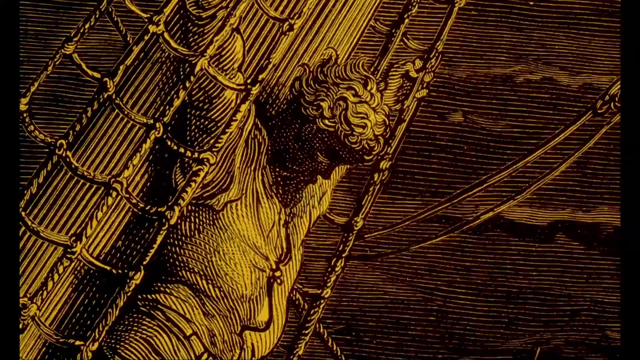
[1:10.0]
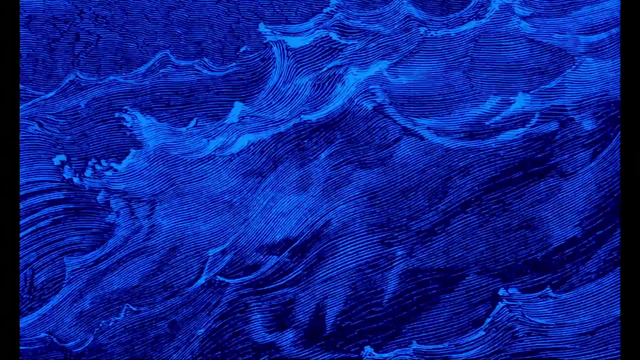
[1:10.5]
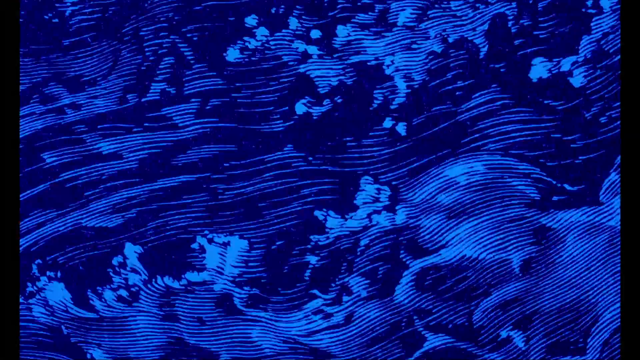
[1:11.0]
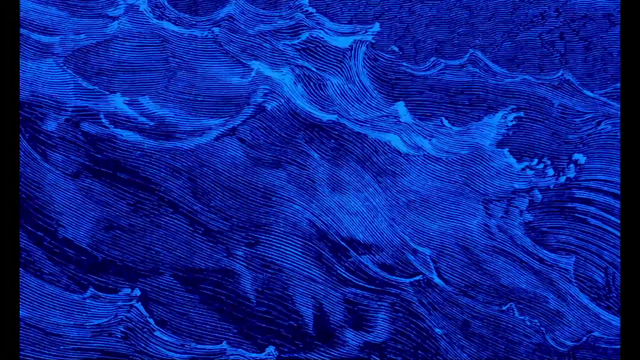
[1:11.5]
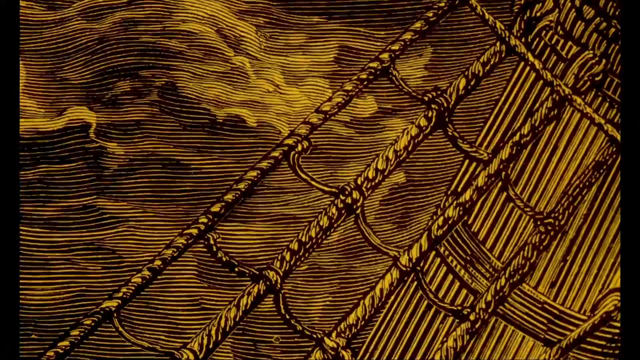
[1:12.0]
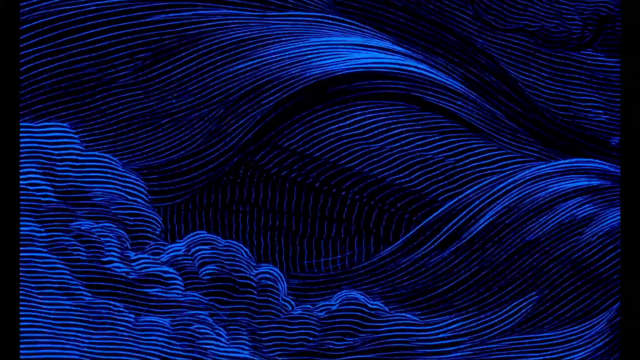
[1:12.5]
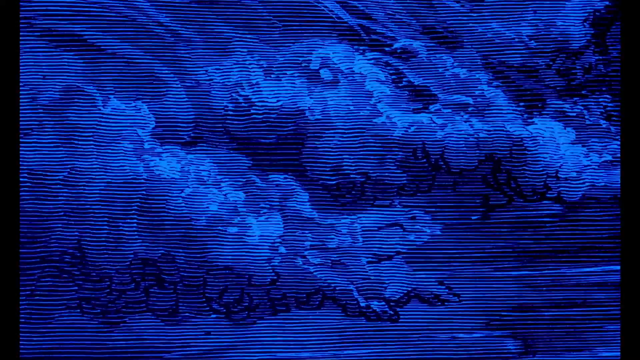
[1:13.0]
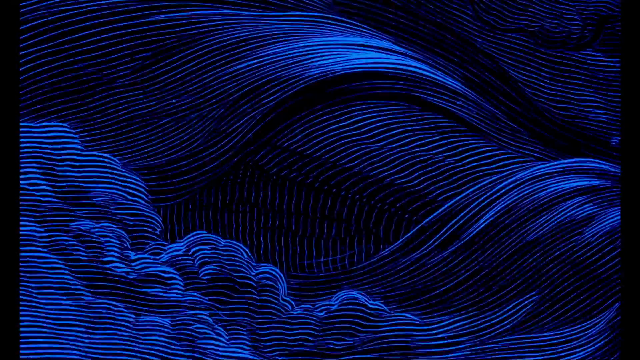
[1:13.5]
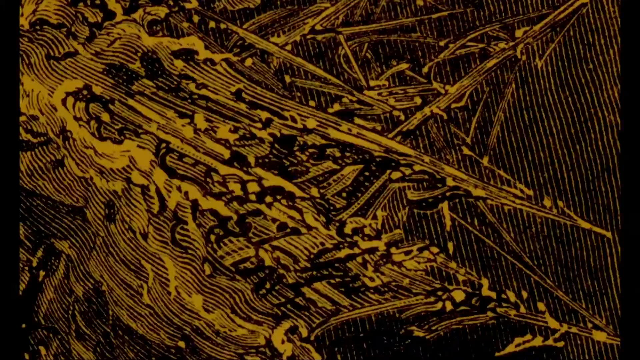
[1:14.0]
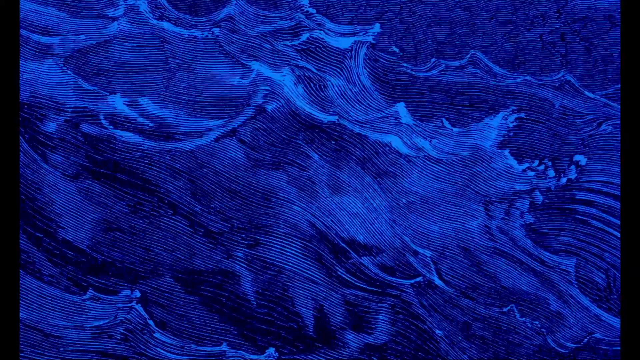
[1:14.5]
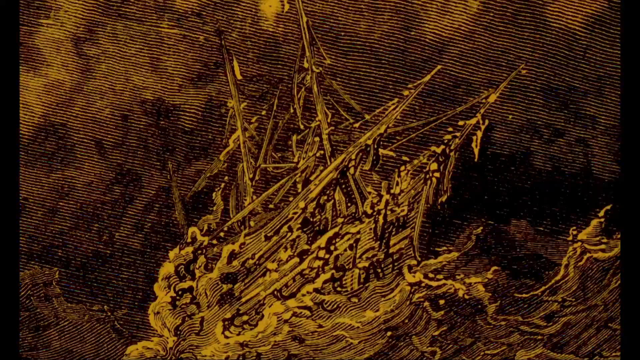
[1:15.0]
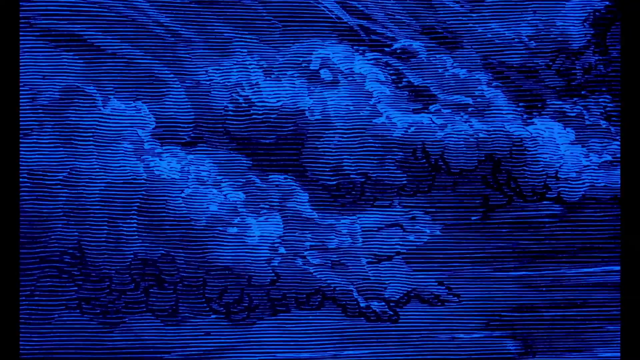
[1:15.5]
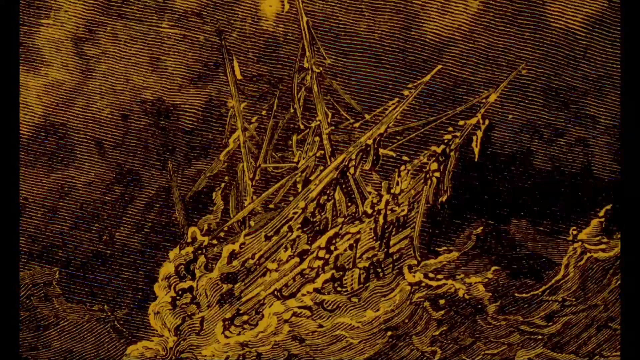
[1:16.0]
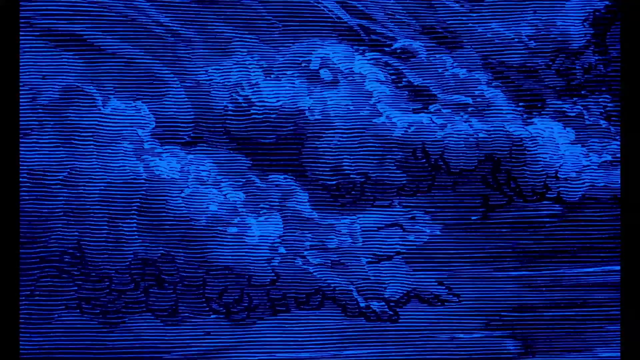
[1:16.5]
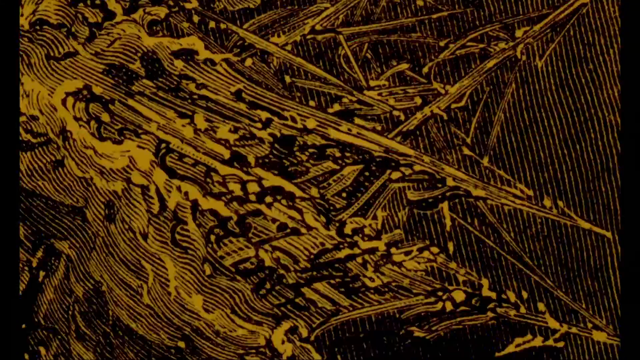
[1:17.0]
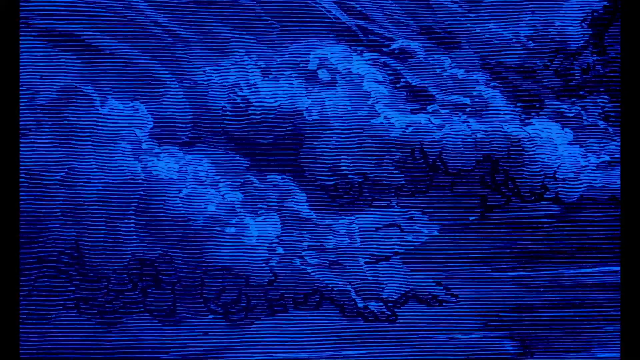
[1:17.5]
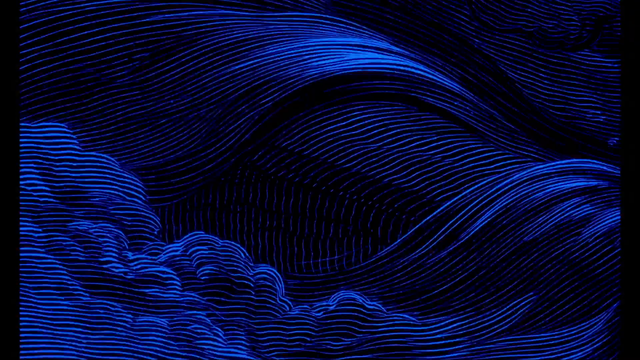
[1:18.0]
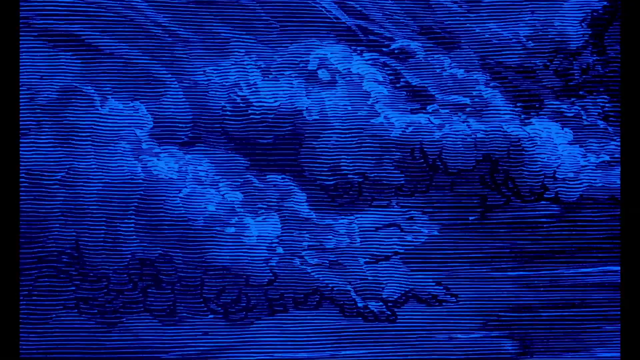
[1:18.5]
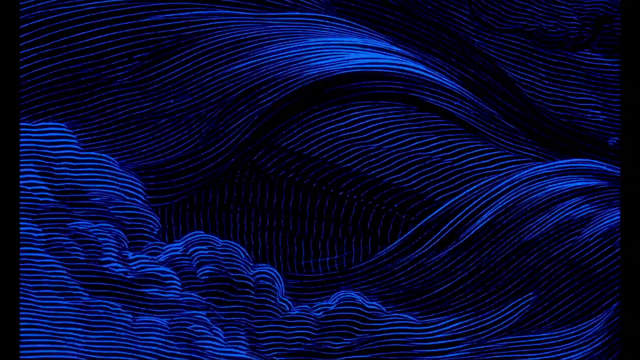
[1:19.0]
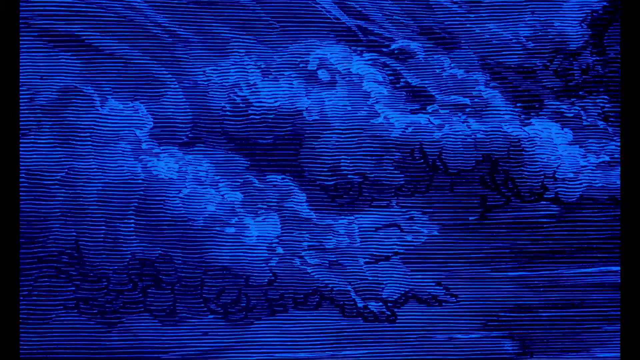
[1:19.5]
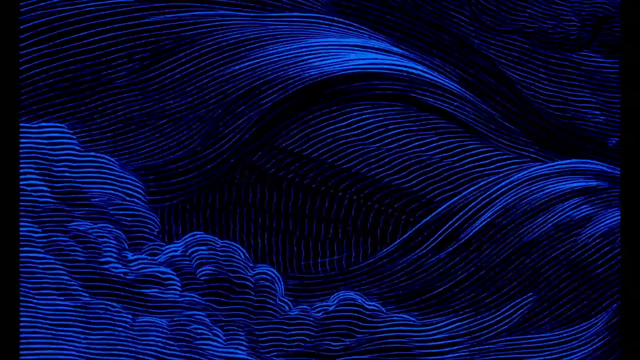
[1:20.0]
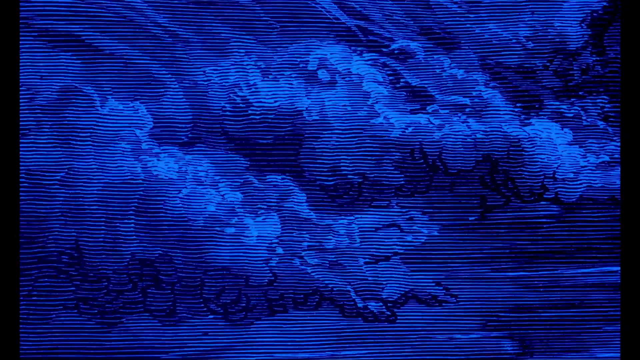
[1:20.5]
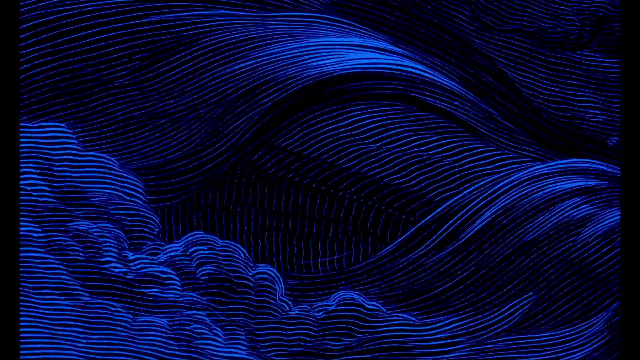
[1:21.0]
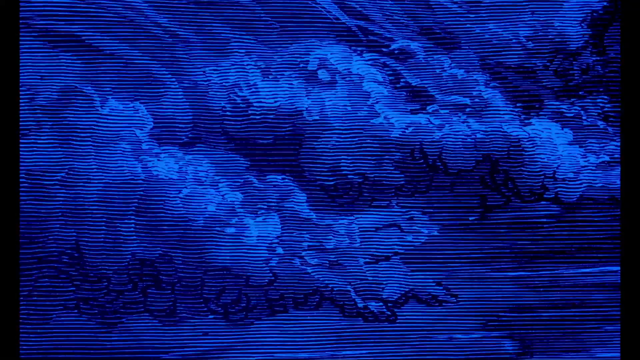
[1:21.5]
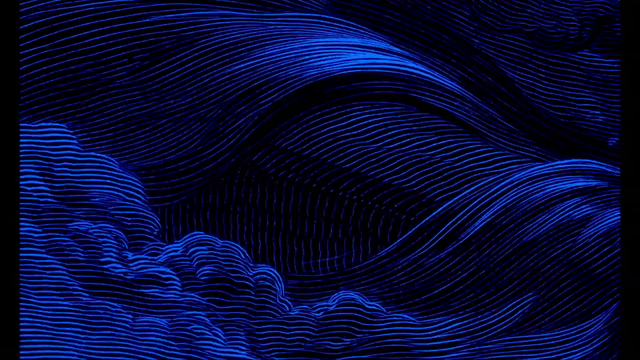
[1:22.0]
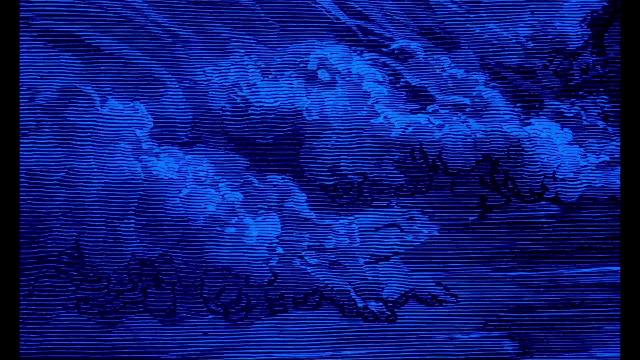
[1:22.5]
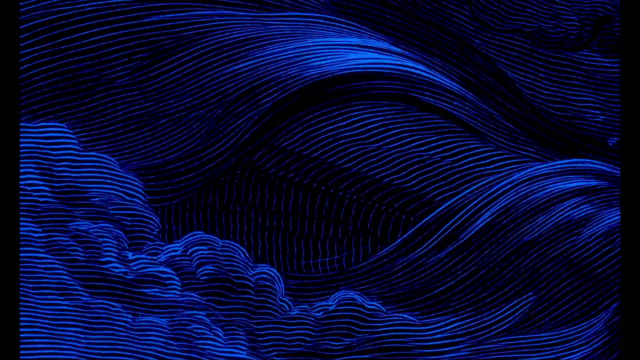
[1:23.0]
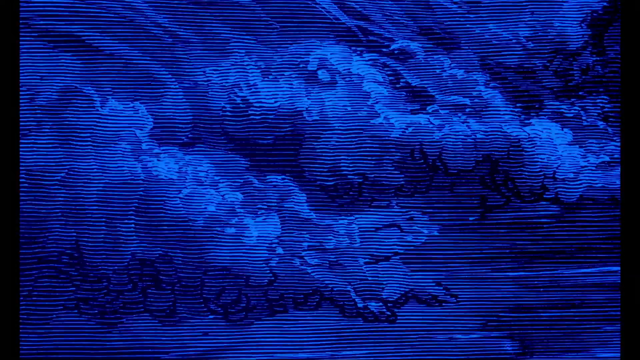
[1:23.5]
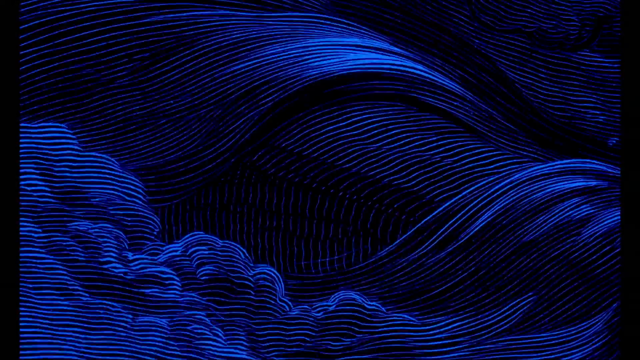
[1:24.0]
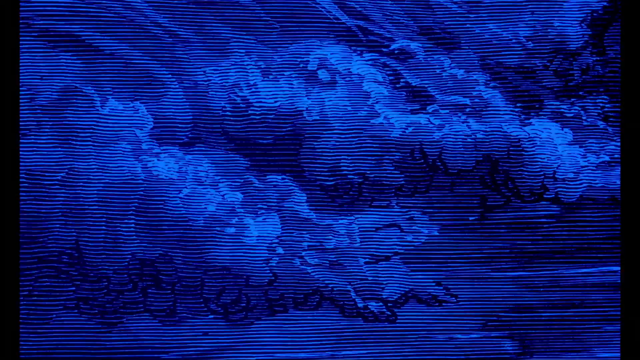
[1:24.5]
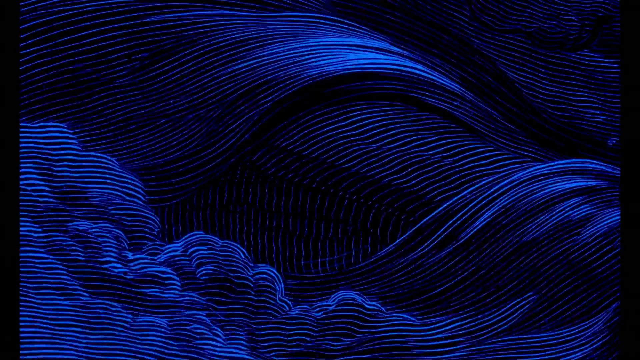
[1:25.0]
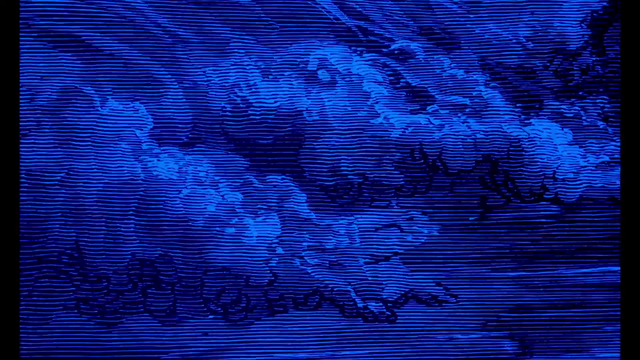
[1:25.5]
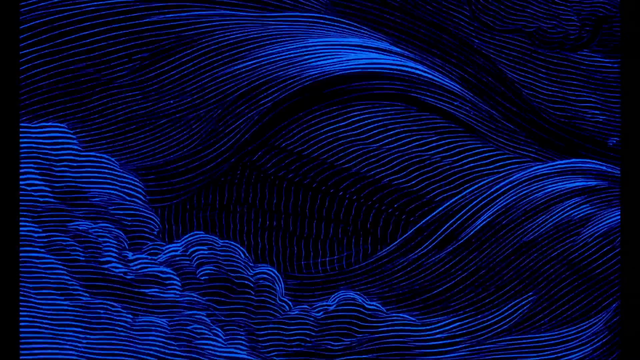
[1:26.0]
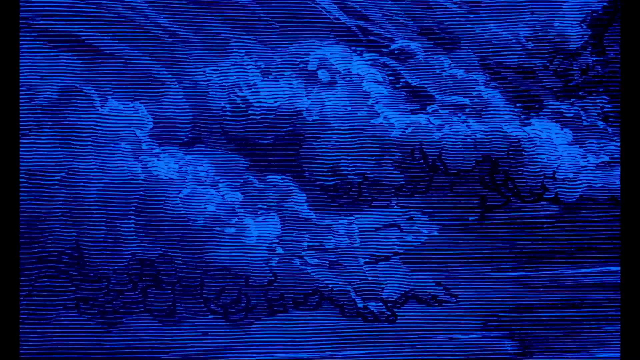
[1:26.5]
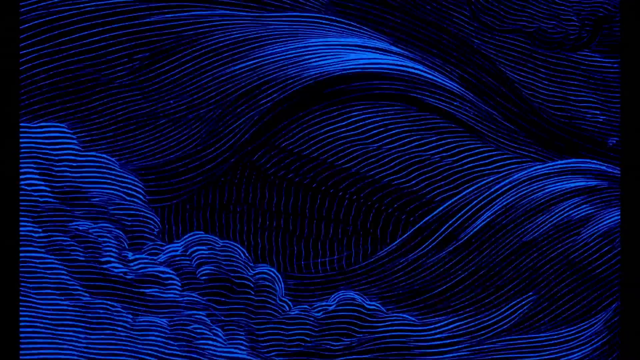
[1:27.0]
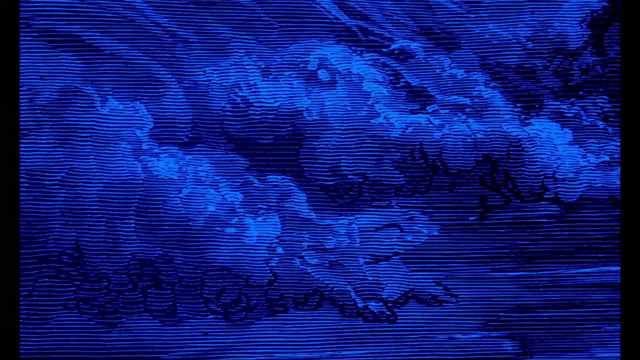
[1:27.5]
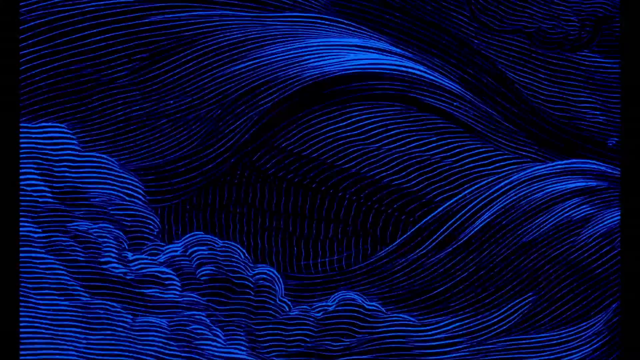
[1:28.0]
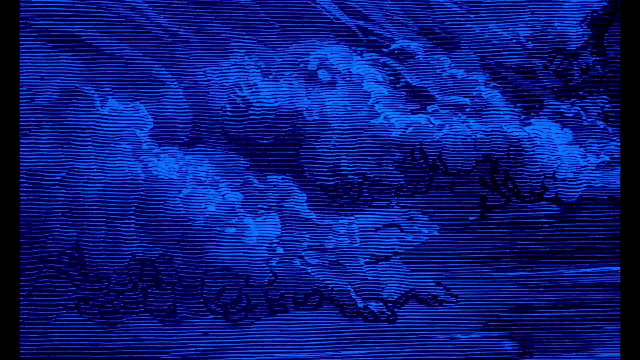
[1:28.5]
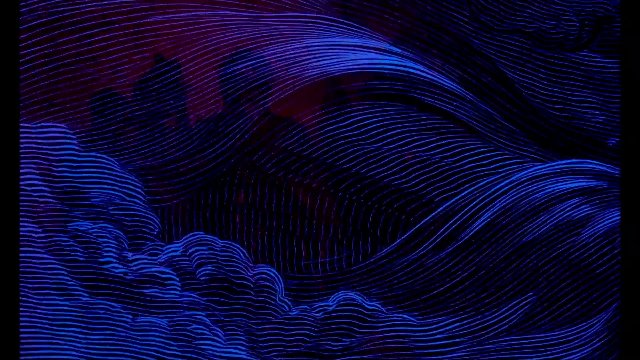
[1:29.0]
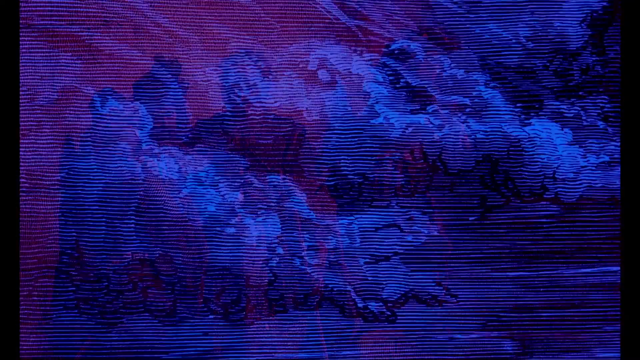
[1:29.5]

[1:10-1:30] The yellow painting shows the man standing against the mast of the ship, his head hung, his wavy hair visible, his arms outstretched as he grips the ropes beside him. The scene transitions to many different paintings of water painted in blue, with yellow paintings of a ship's mast appearing occasionally among them. A few different yellow paintings of shipwrecks begin to flash on screen momentarily during the transitions between the blue water paintings. Paintings of water continue to appear for most of the remaining time, before the scene fades and transitions. A painting in a burgundy, red-like hue begins to emerge, showing four people standing.